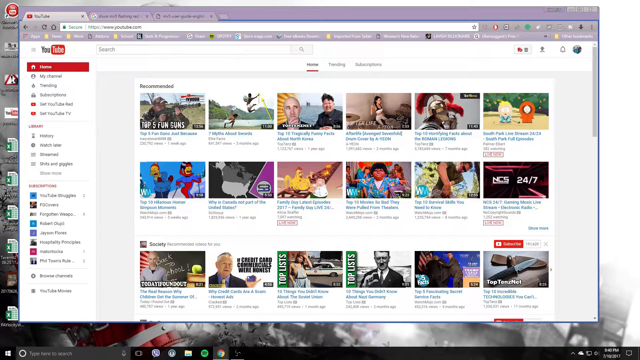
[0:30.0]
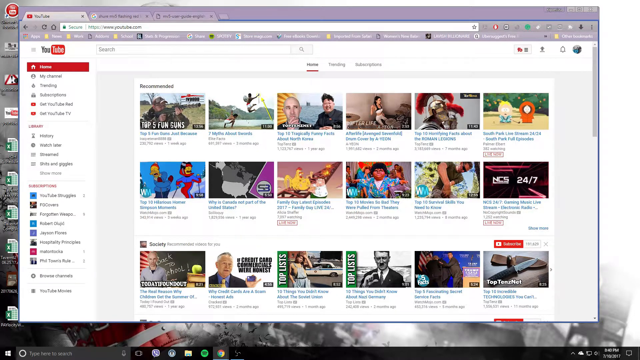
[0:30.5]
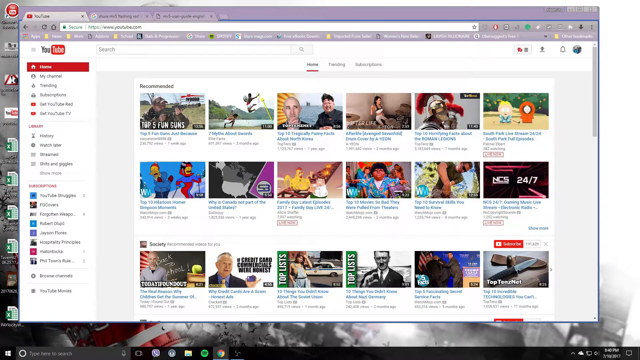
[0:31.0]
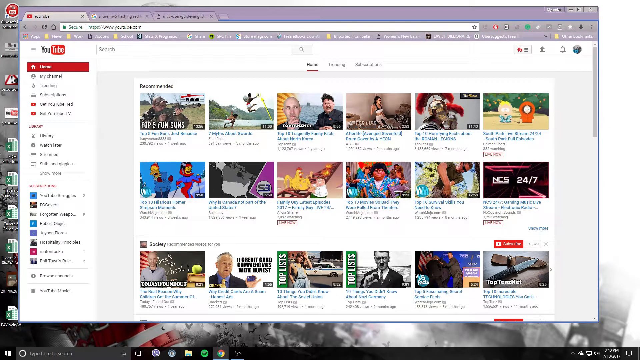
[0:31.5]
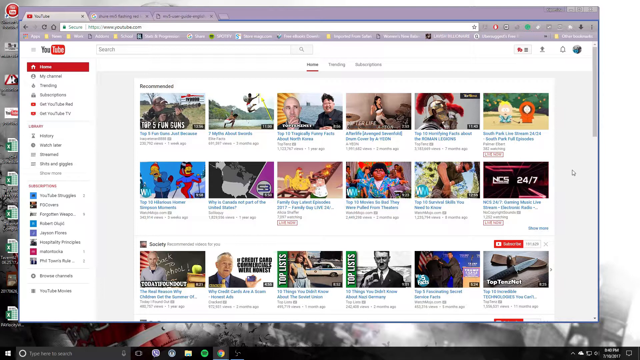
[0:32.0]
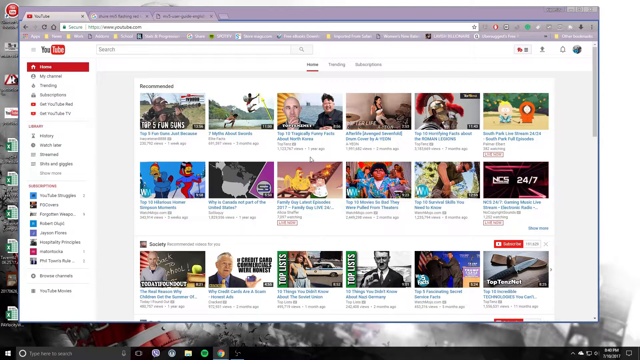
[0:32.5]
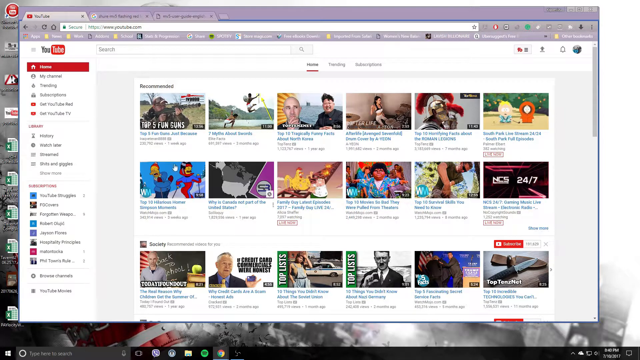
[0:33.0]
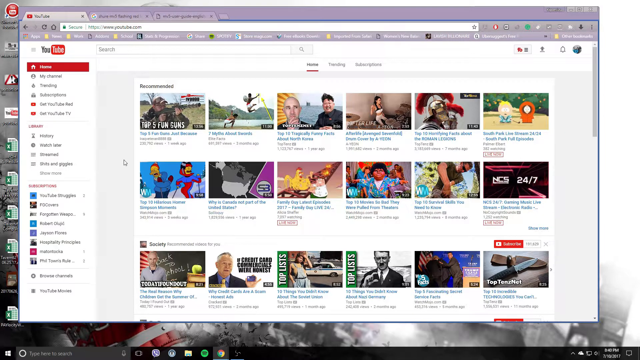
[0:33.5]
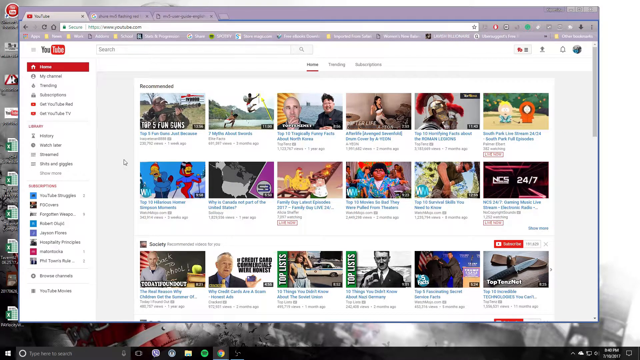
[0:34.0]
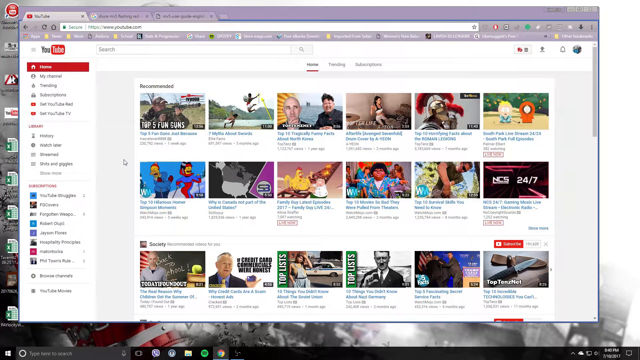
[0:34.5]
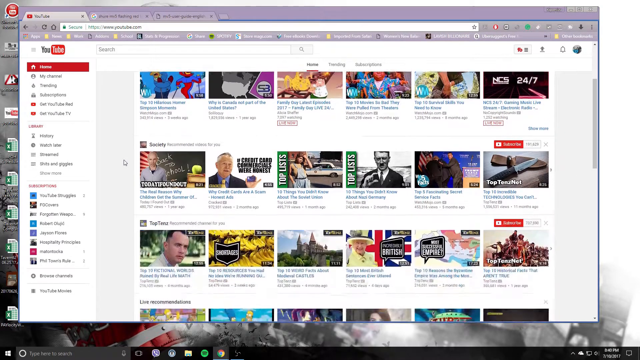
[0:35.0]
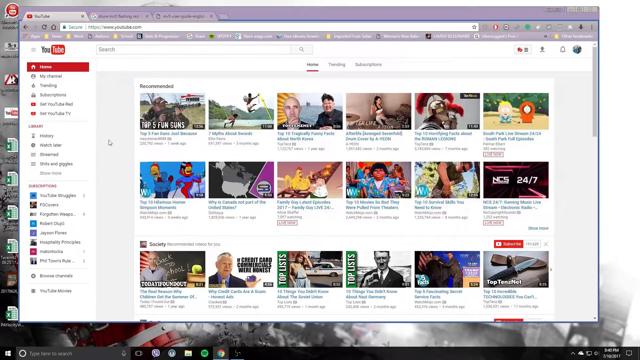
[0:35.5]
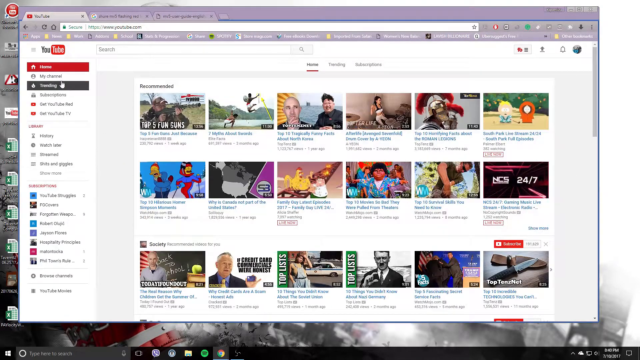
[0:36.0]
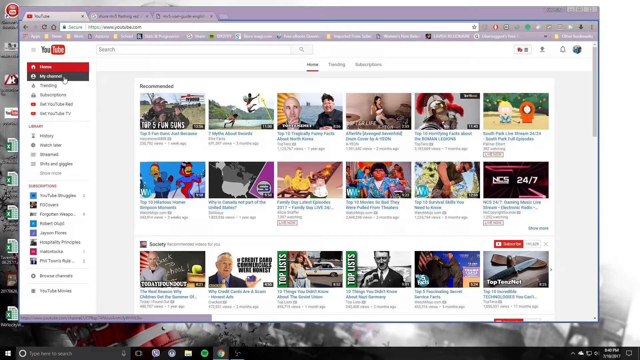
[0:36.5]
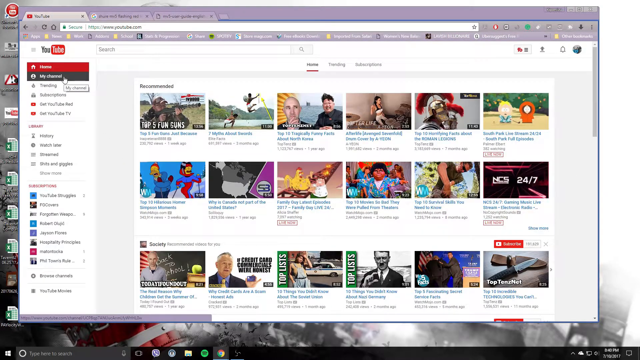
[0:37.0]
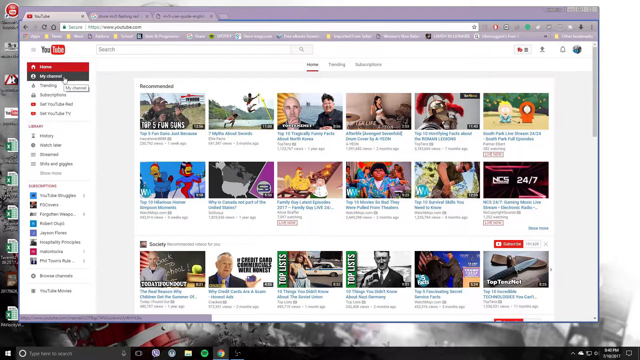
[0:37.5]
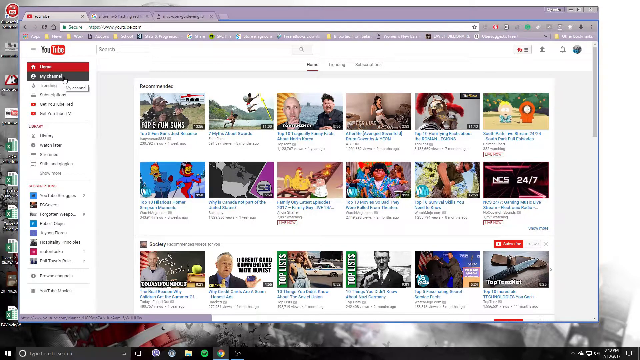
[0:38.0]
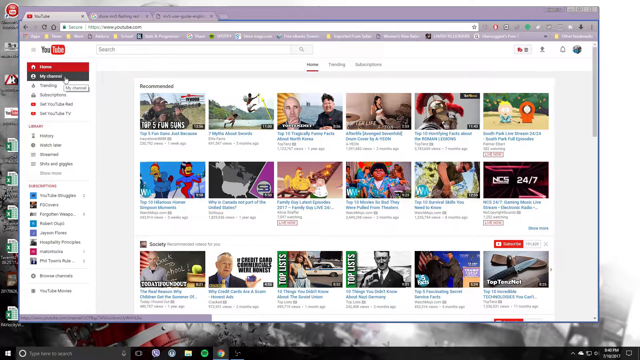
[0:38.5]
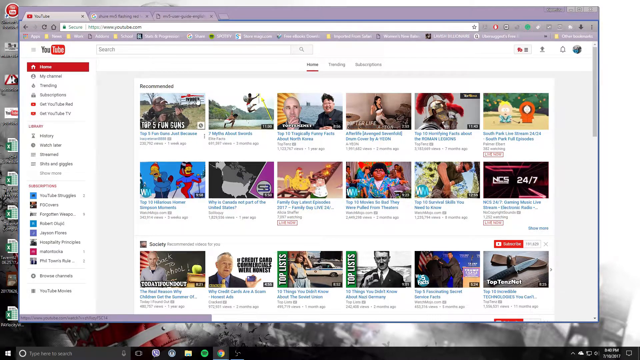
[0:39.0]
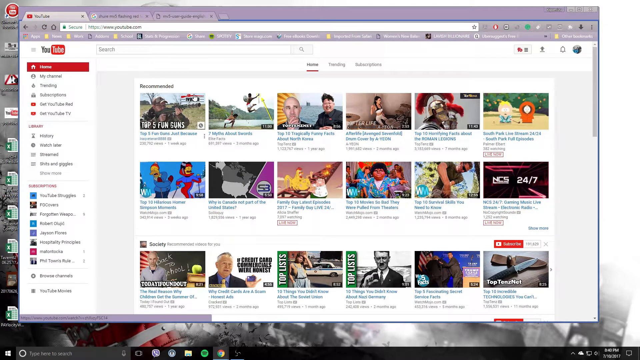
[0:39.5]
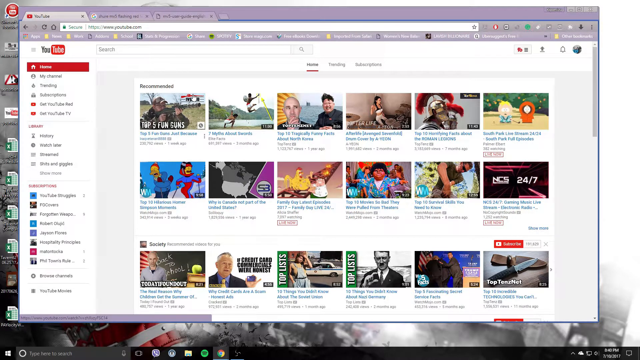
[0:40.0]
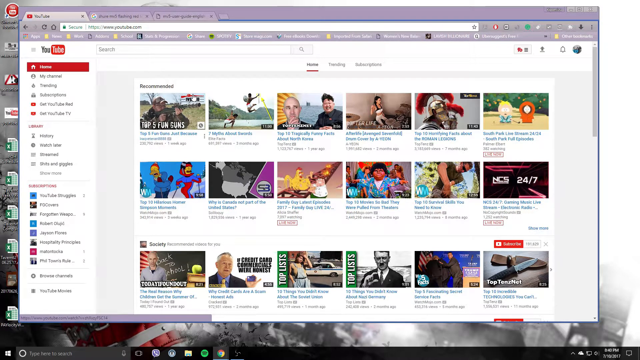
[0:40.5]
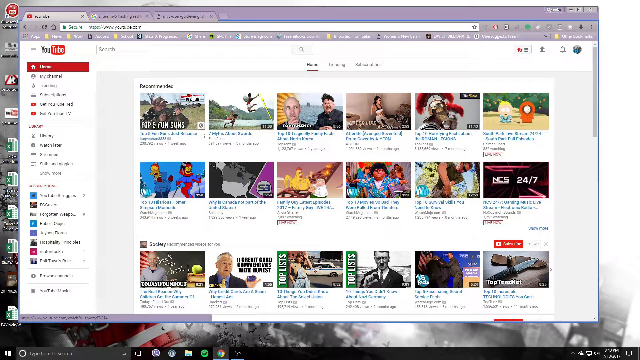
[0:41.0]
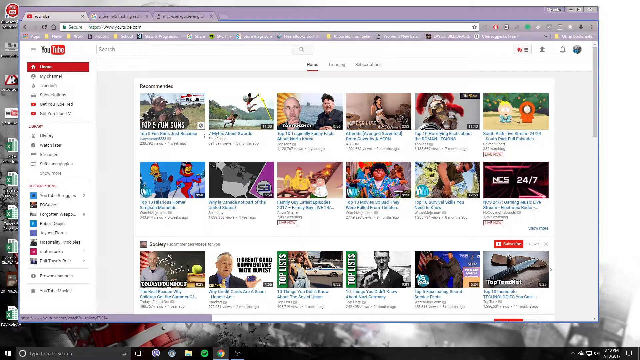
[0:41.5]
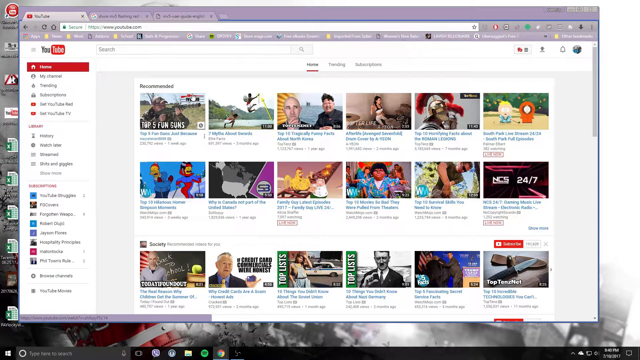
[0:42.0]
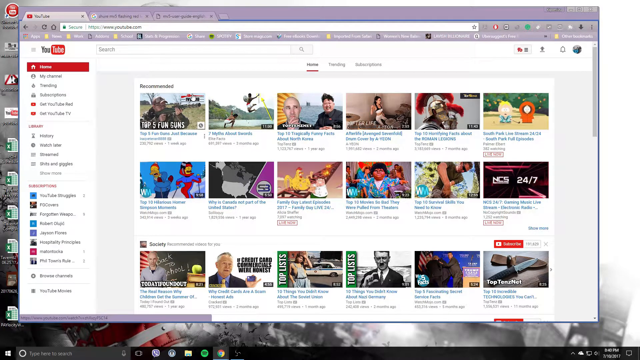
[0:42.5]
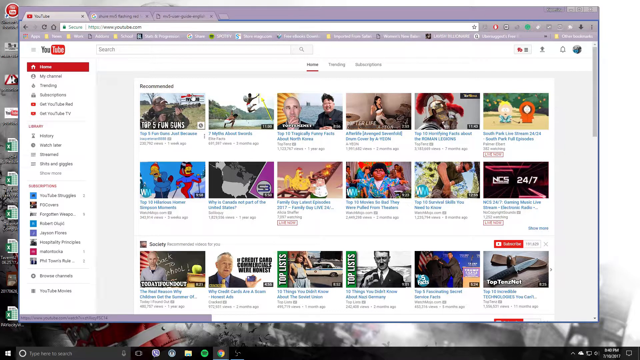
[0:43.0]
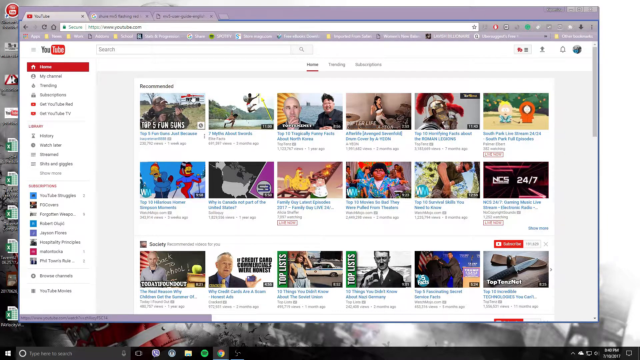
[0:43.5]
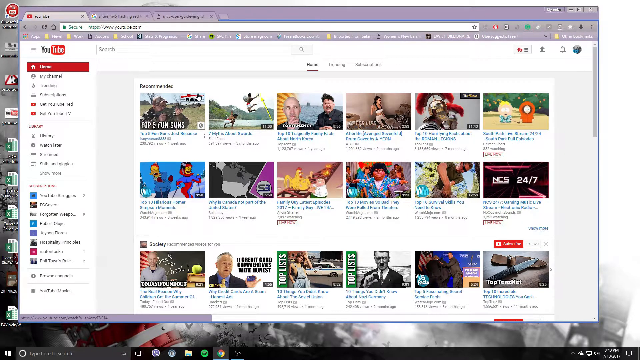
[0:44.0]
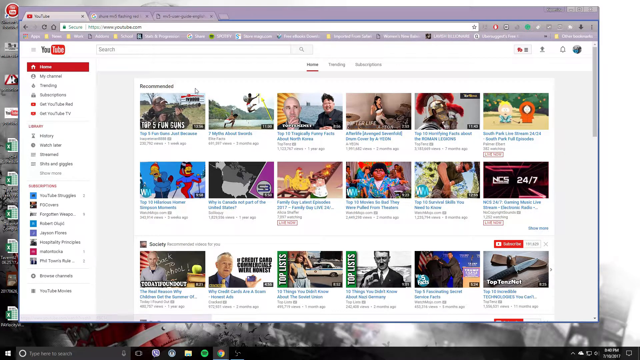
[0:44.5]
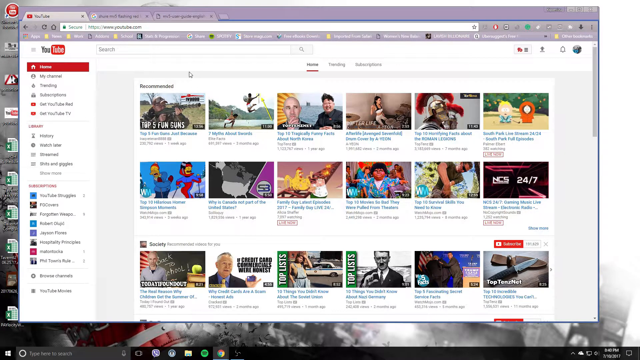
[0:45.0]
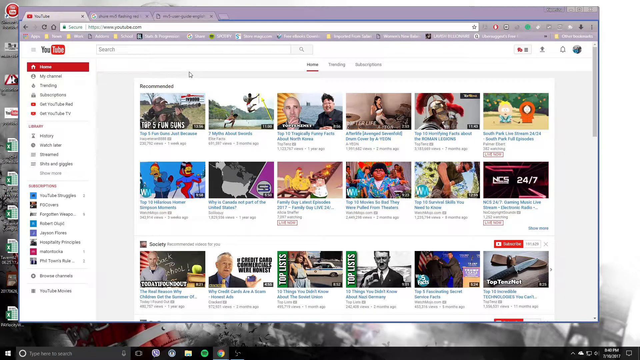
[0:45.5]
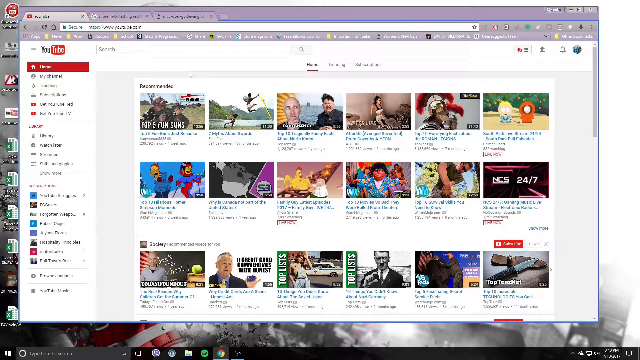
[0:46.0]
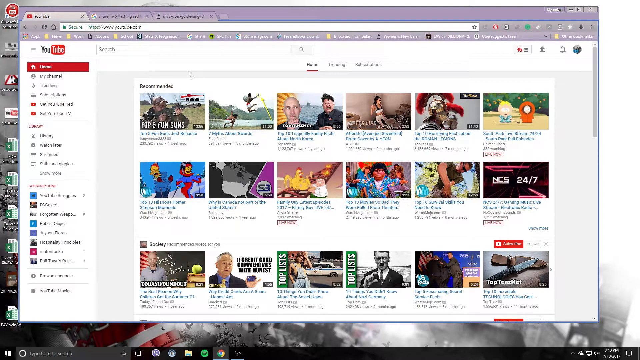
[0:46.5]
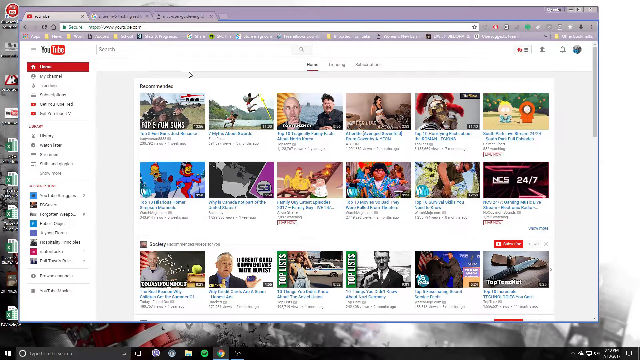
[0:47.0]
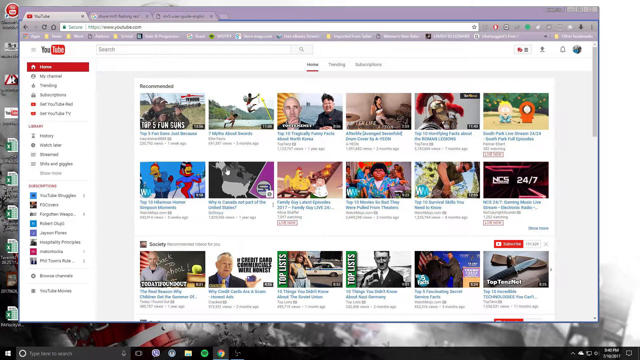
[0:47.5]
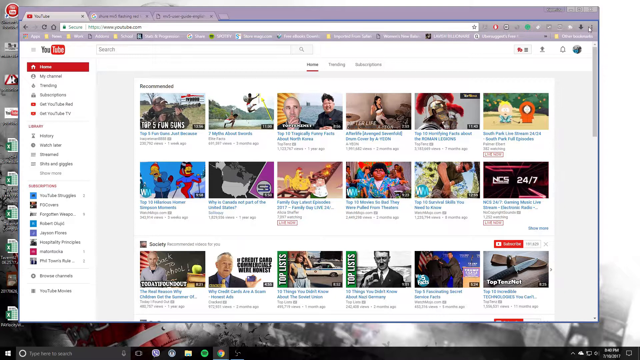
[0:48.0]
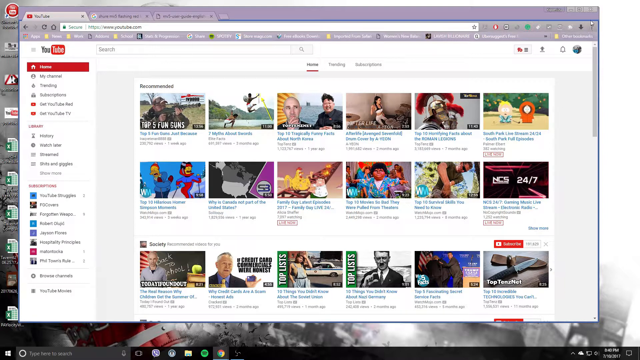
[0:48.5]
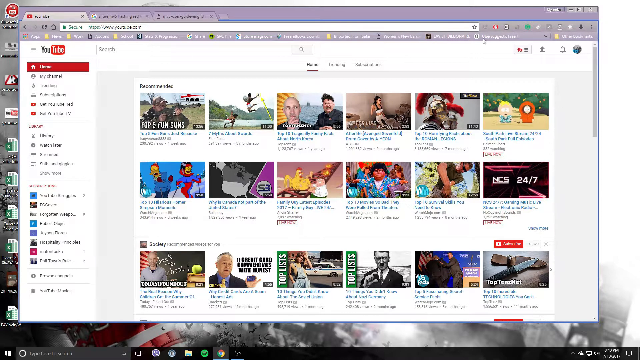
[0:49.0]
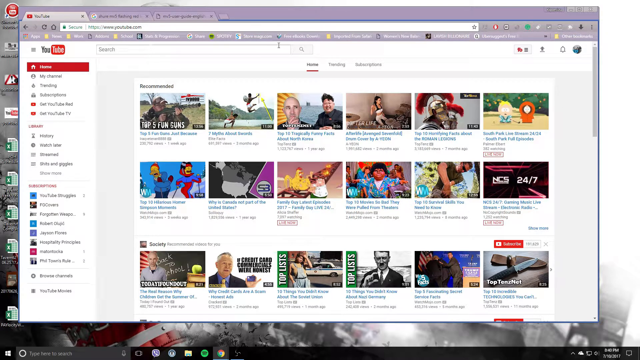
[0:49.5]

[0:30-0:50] A YouTube page, sort of the home page, is shown. The menu on the left side includes Home, My Channel and Library, with Home selected, so title cards of videos are displayed. The top section is labeled Recommended, and the section underneath is labeled Society. The cursor moves around the page, scrolls up and down, hovers over My Channel, then hovers over a video in the Recommended section and over portions of the menu, but never selects anything. The search bar is empty. The page stays pretty stagnant and does not change in any way.